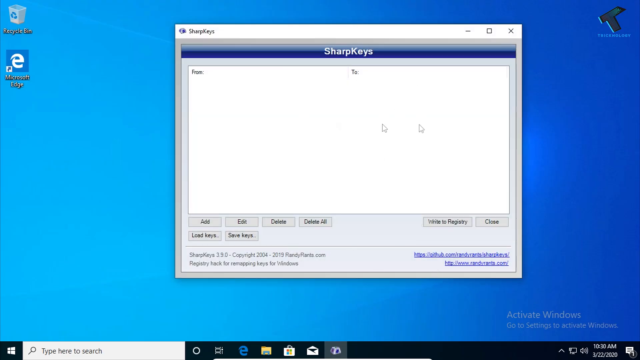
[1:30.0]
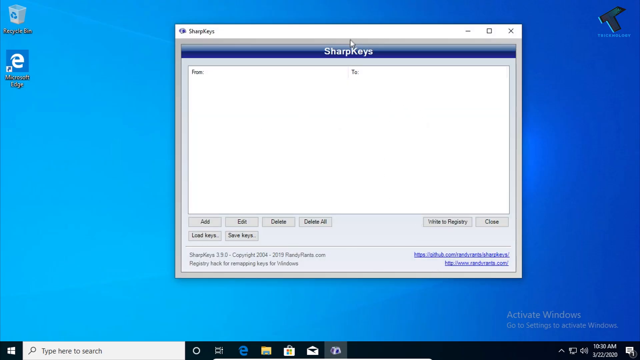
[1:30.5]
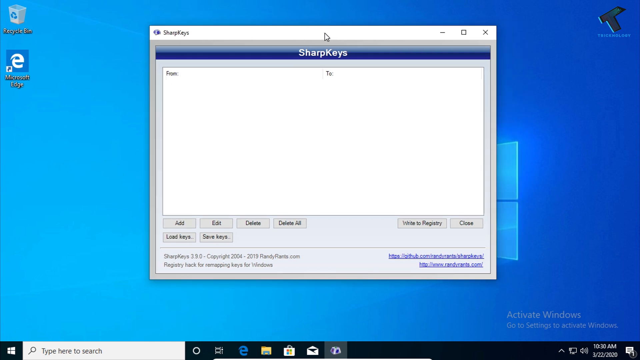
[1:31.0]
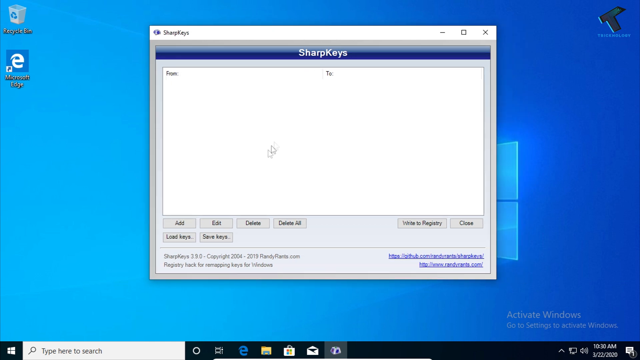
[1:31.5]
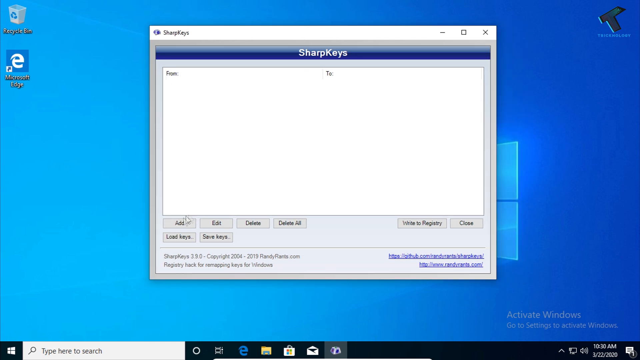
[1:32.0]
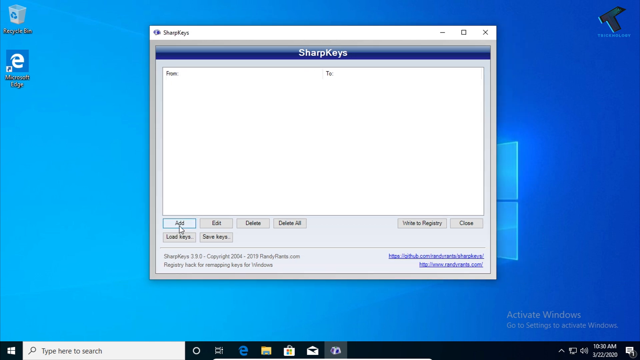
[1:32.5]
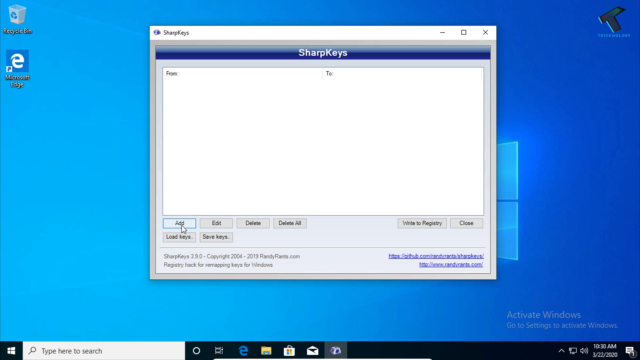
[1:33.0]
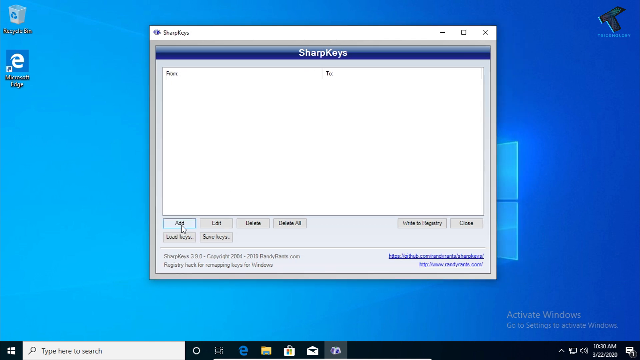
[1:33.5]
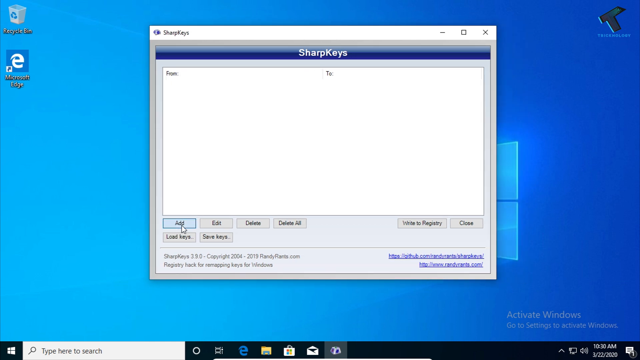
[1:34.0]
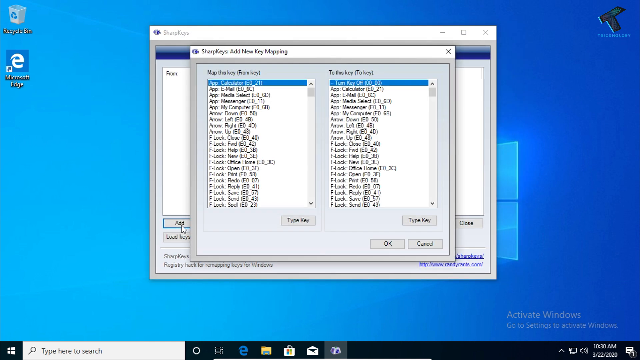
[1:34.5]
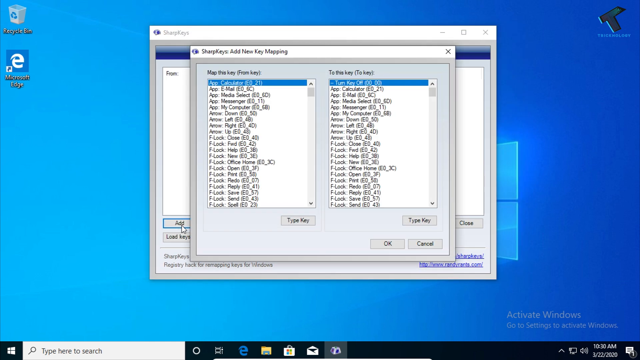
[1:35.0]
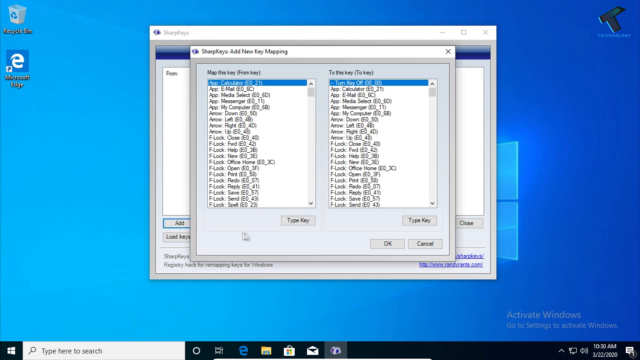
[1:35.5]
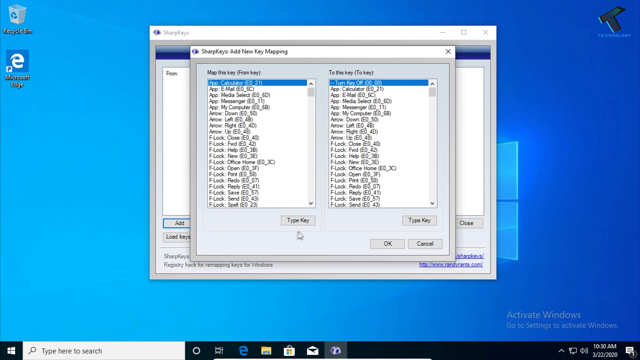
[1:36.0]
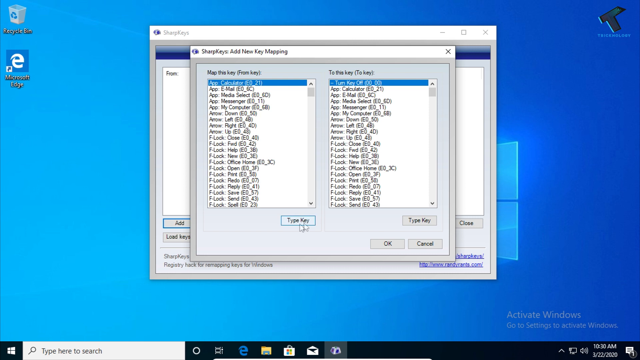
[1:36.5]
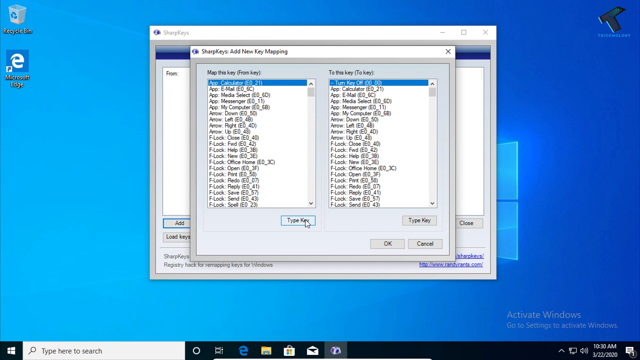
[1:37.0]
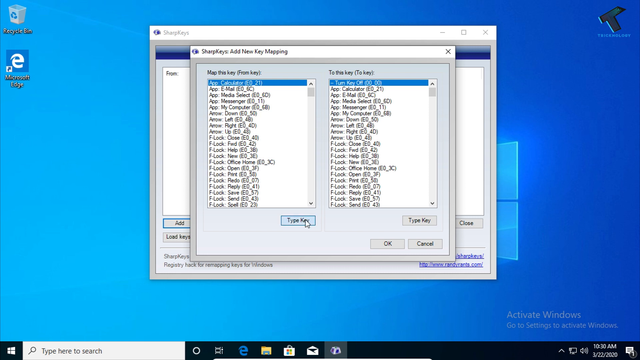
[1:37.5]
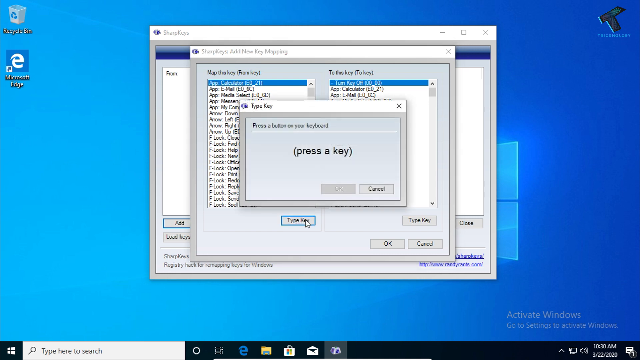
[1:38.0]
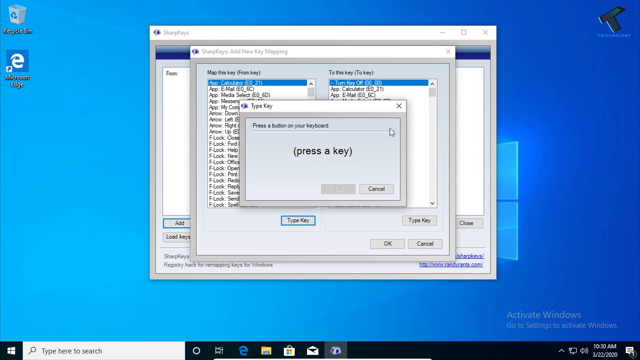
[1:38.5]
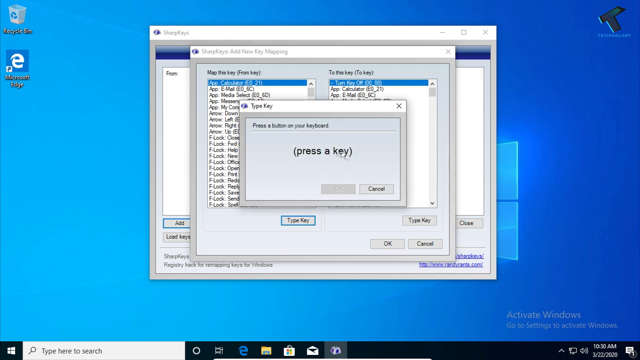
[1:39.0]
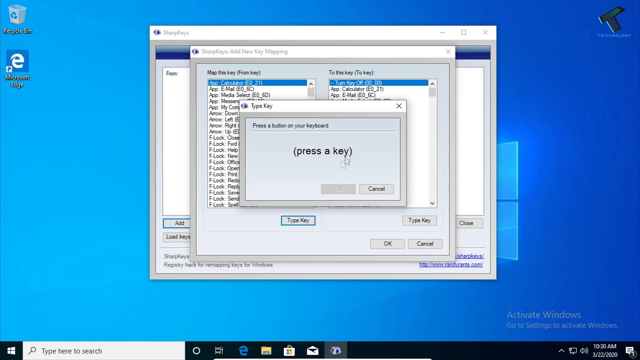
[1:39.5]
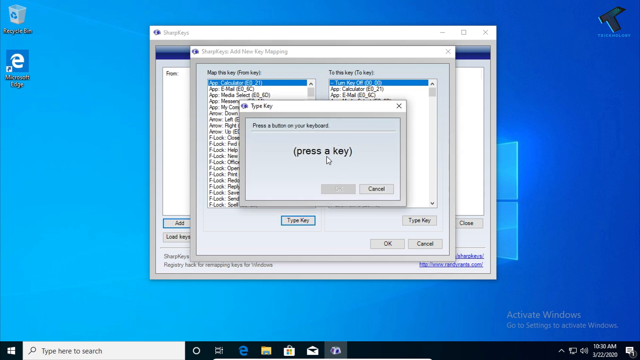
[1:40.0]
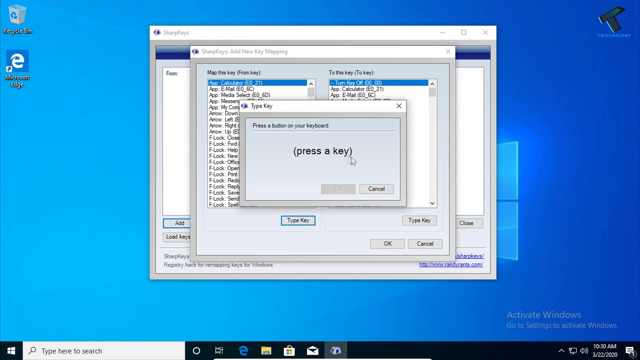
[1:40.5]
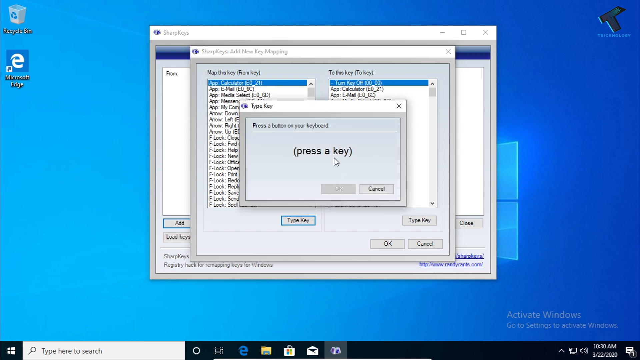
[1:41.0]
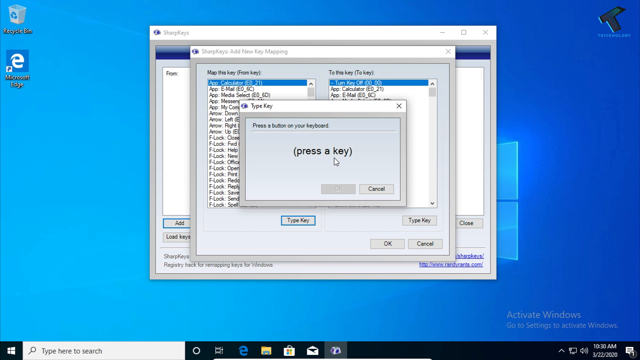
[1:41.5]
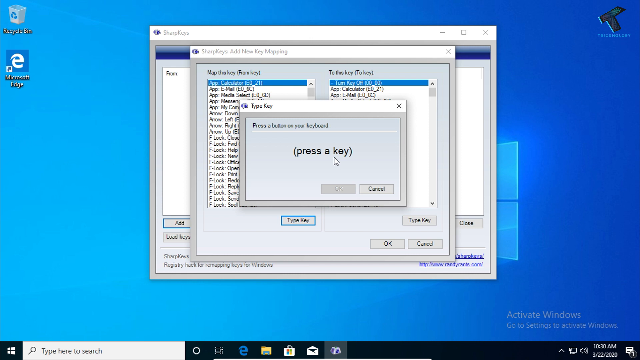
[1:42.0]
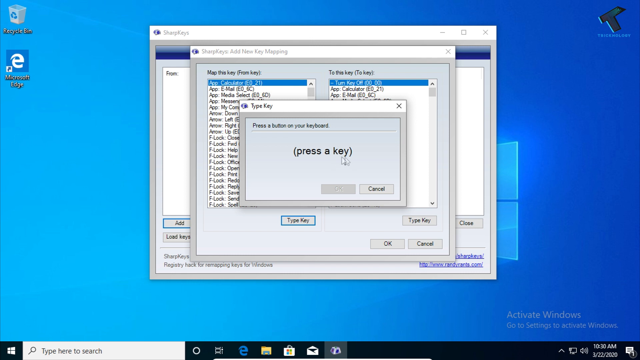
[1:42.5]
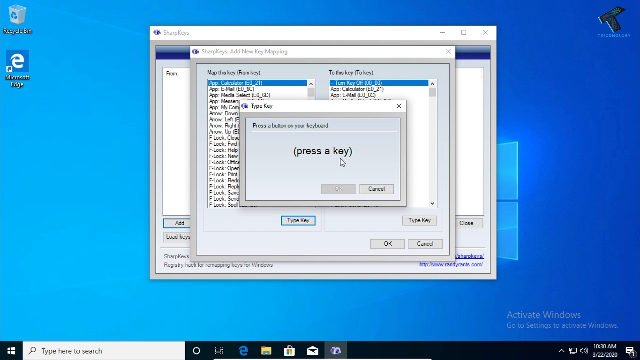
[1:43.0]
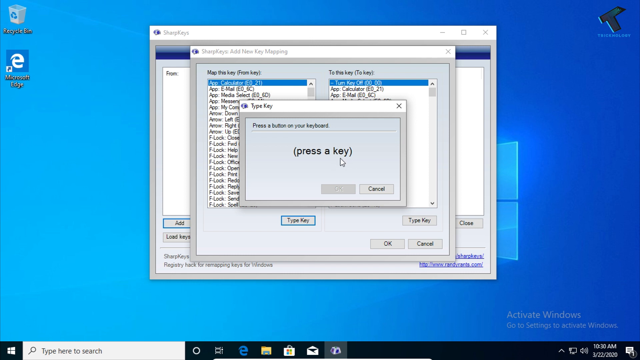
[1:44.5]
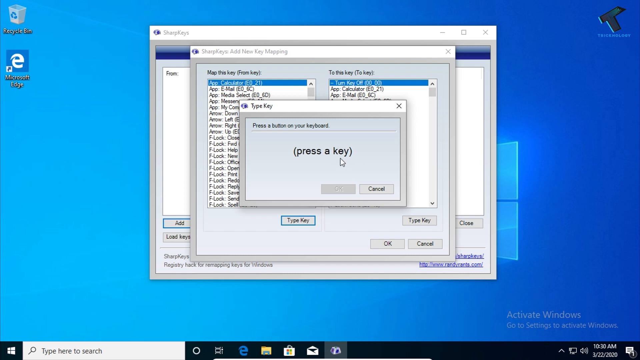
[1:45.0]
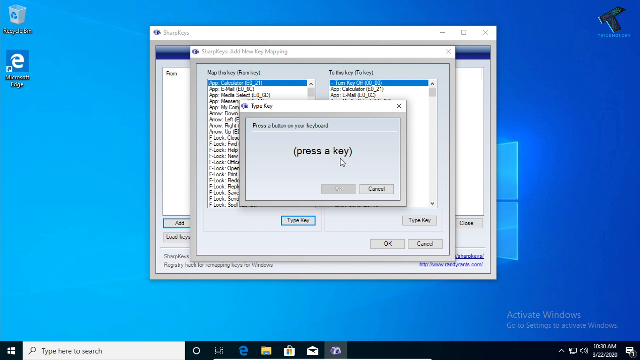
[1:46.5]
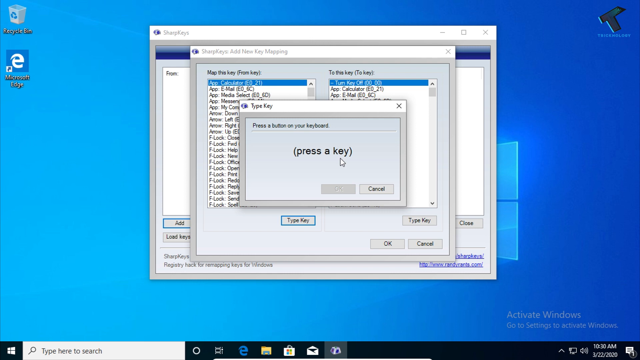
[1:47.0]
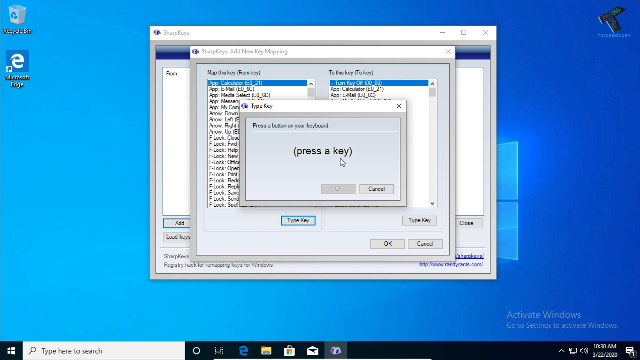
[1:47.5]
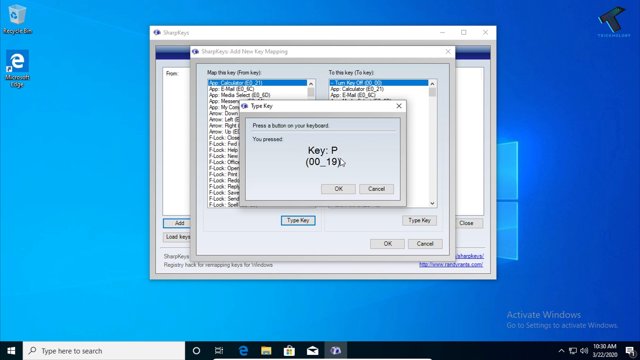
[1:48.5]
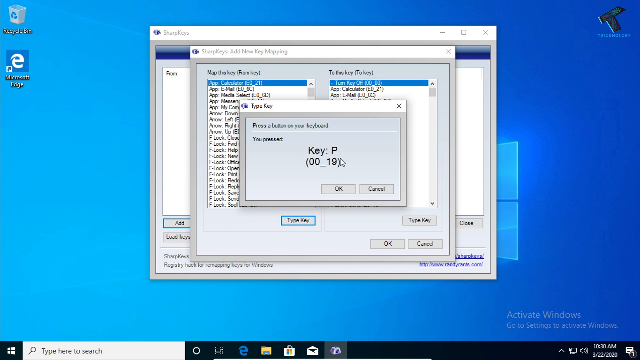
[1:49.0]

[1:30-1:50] The SharpKeys app appears to open as a pop-up window with "SharpKeys" at the top and a blue bar across the top reading "SharpKeys". The user seems to move the window around, then selects Add, and what looks like a mapping screen appears, possibly for mapping different functions to different keys on the keyboard. The user apparently presses the button for Type Key, and a pop-up window appears reading "press a key" in parentheses. "Key p" appears to be selected, and below it in parentheses is "00_19".